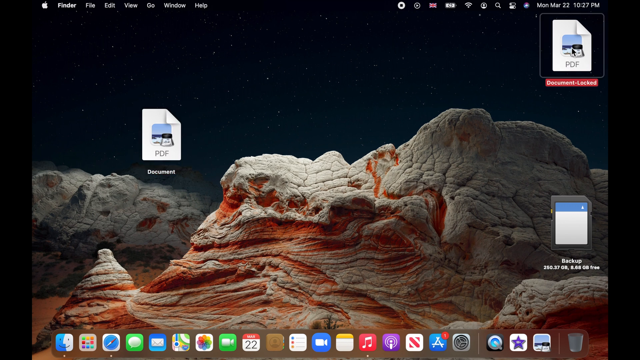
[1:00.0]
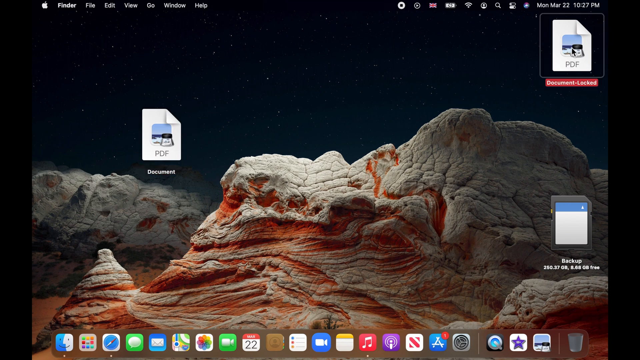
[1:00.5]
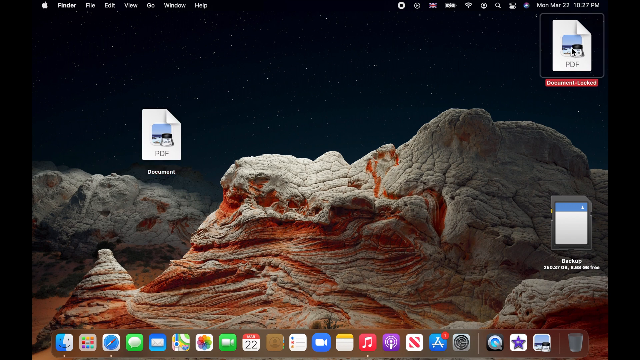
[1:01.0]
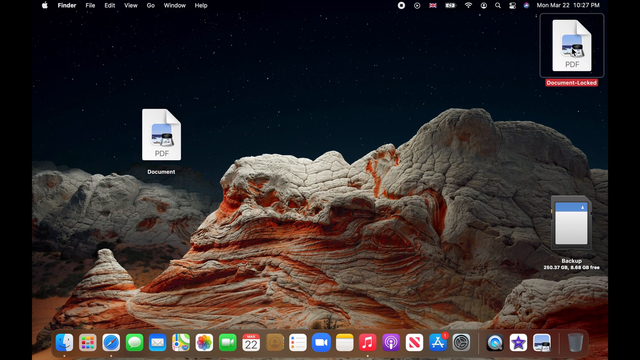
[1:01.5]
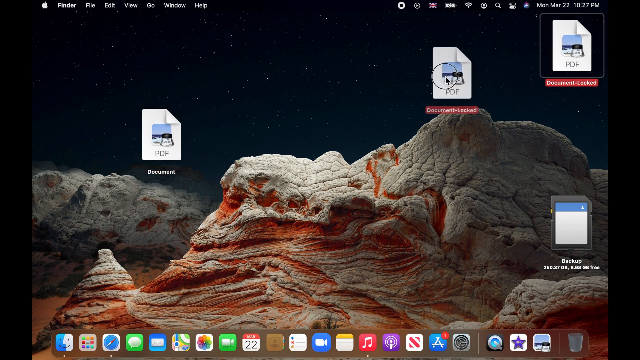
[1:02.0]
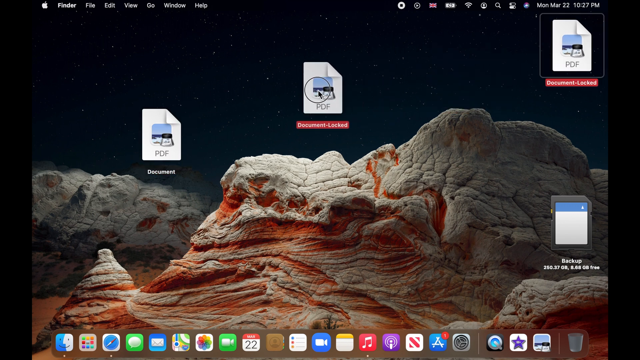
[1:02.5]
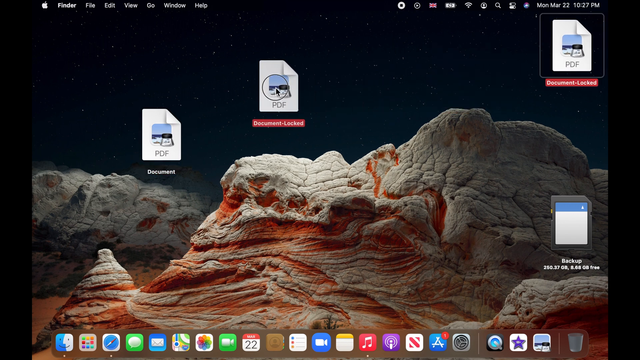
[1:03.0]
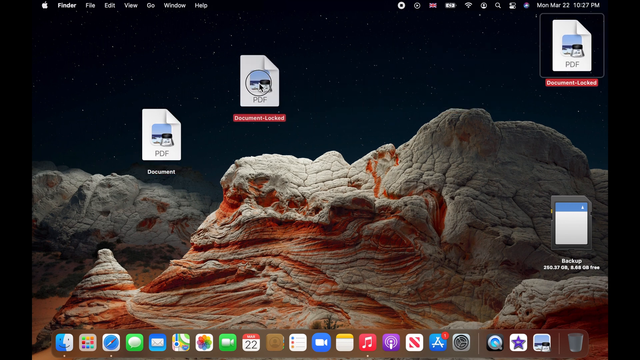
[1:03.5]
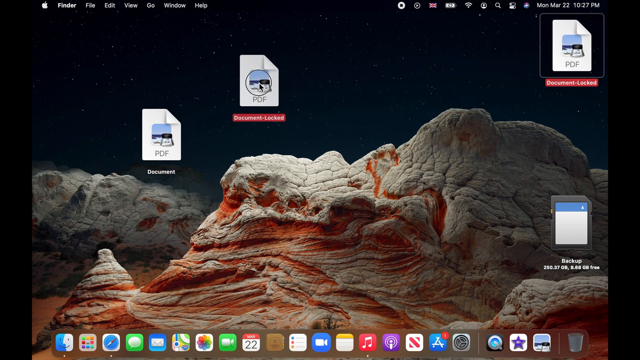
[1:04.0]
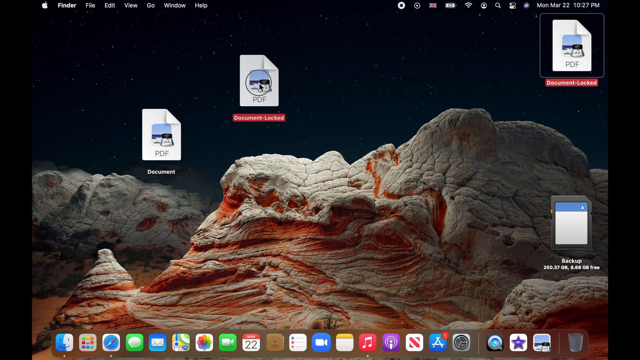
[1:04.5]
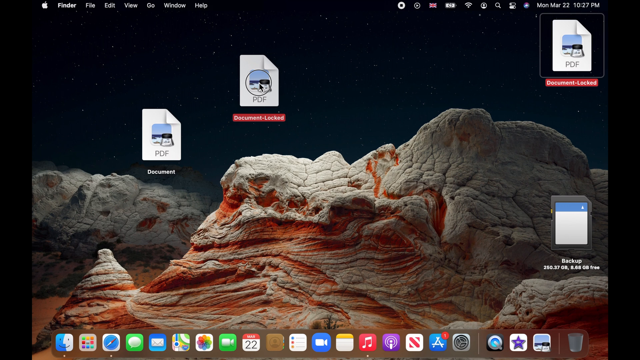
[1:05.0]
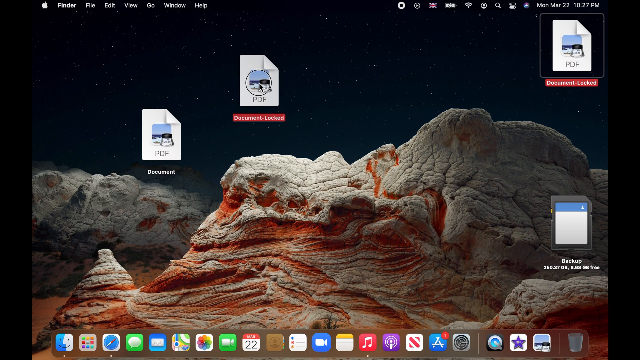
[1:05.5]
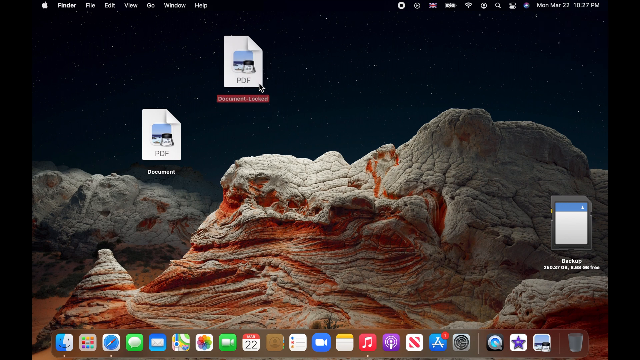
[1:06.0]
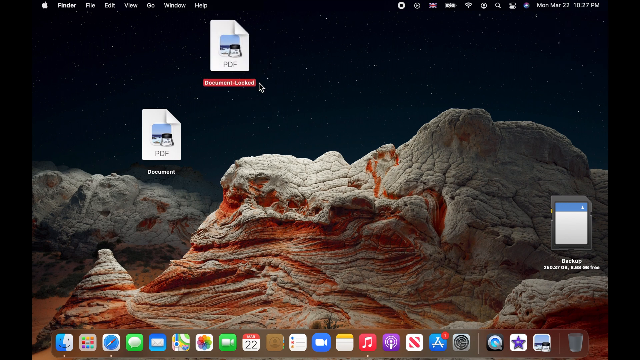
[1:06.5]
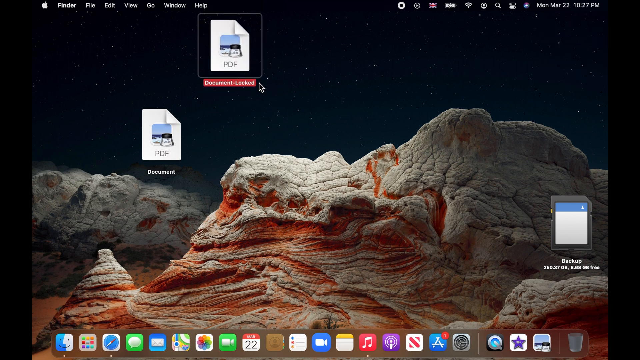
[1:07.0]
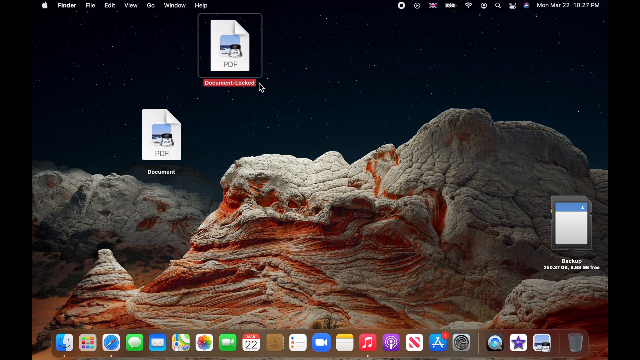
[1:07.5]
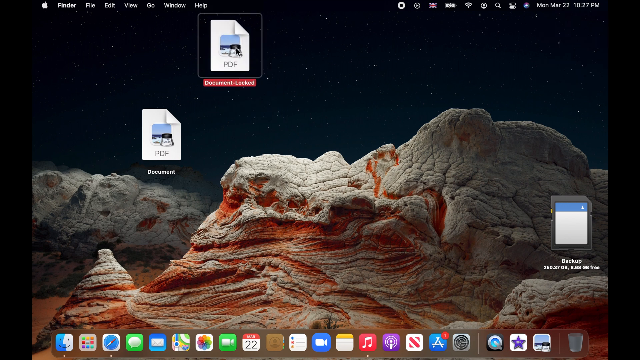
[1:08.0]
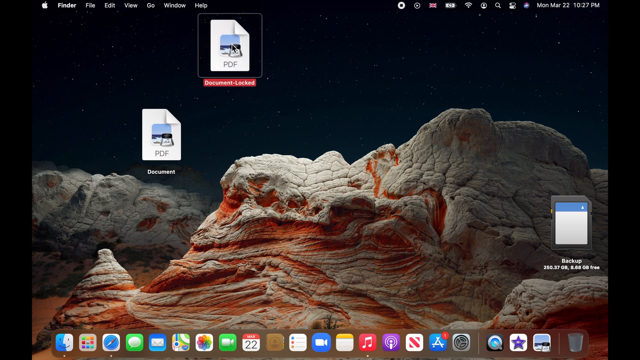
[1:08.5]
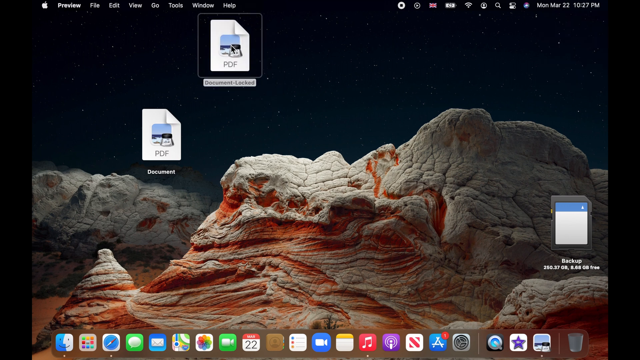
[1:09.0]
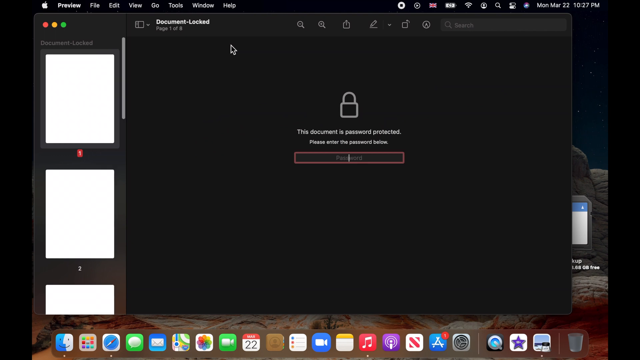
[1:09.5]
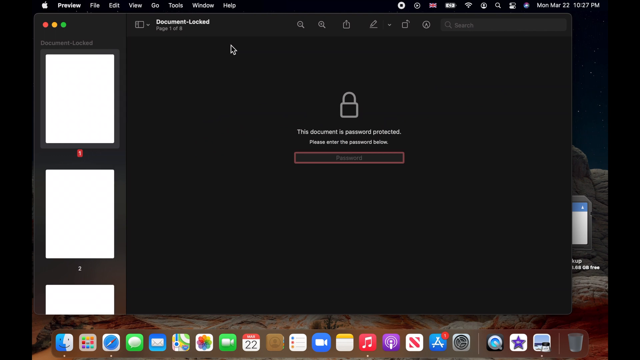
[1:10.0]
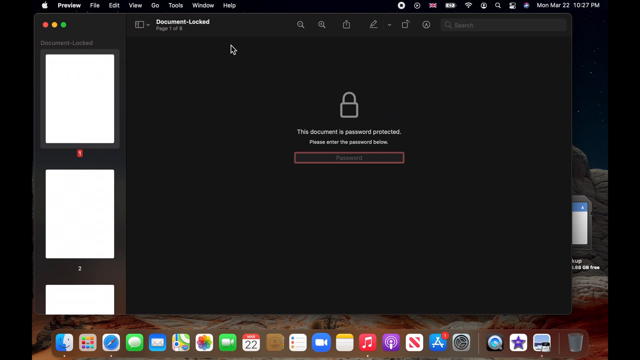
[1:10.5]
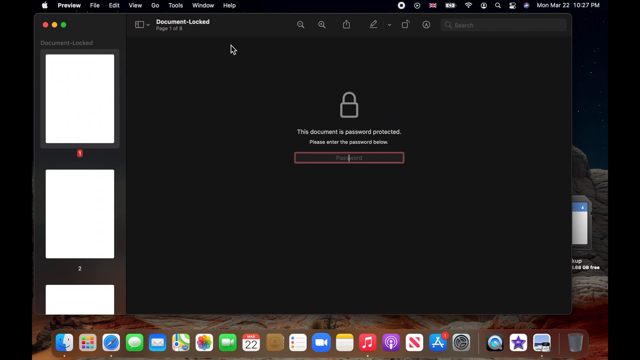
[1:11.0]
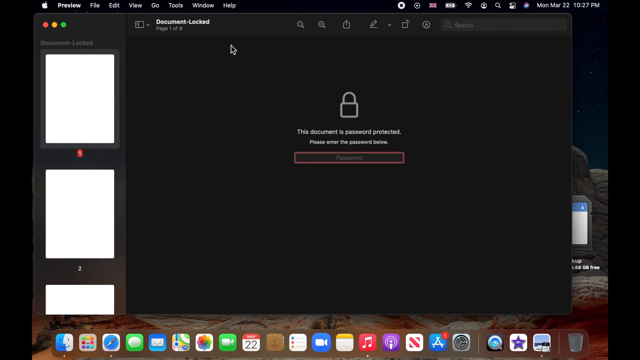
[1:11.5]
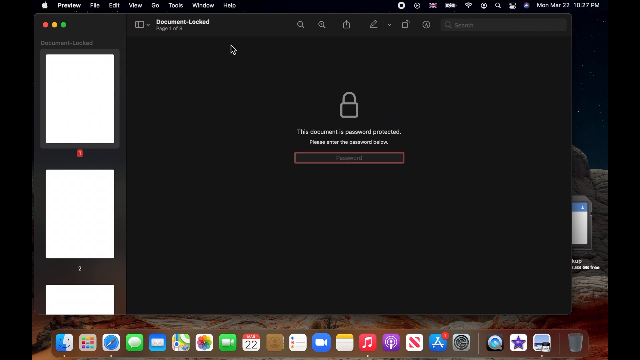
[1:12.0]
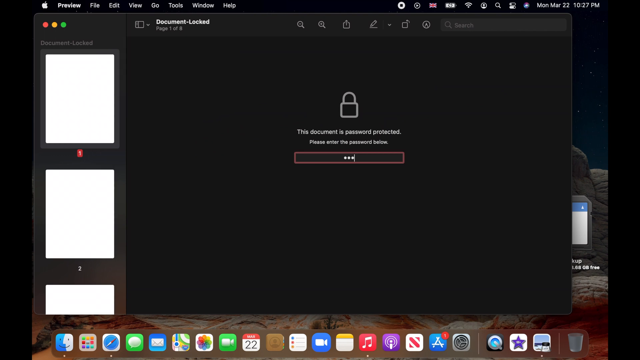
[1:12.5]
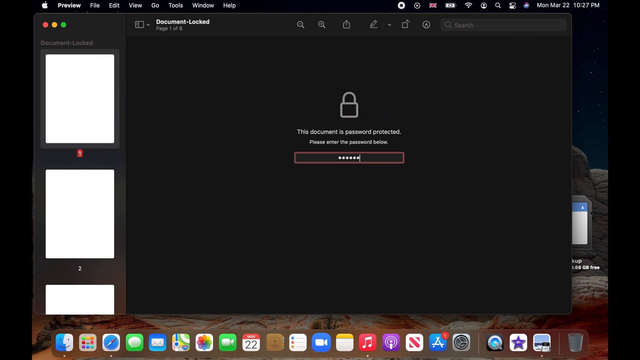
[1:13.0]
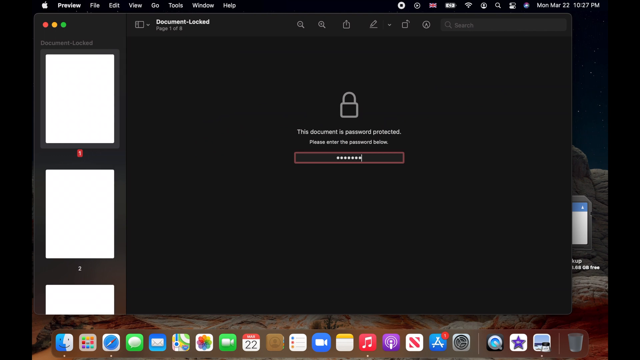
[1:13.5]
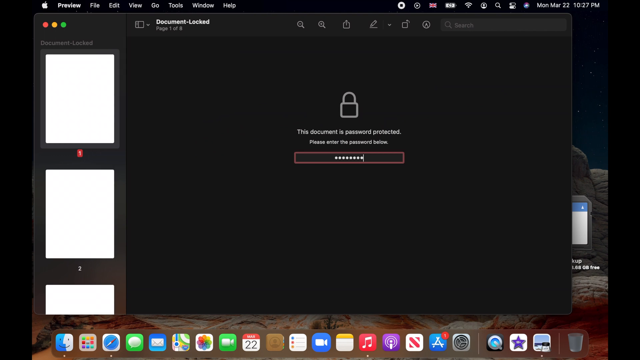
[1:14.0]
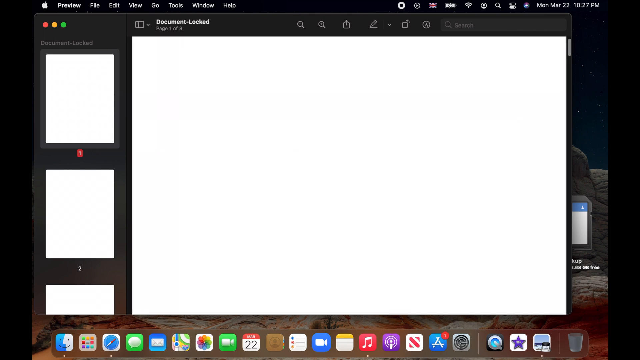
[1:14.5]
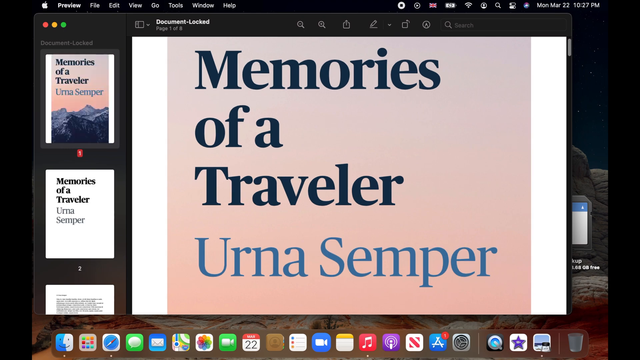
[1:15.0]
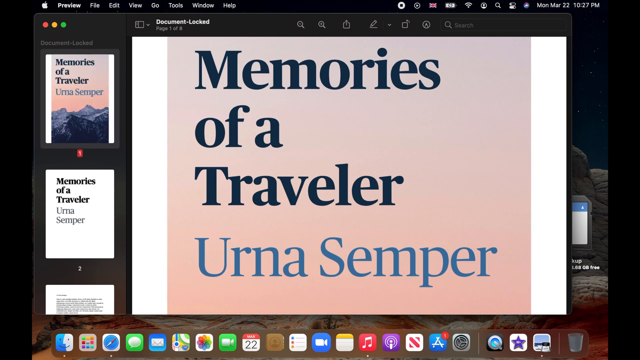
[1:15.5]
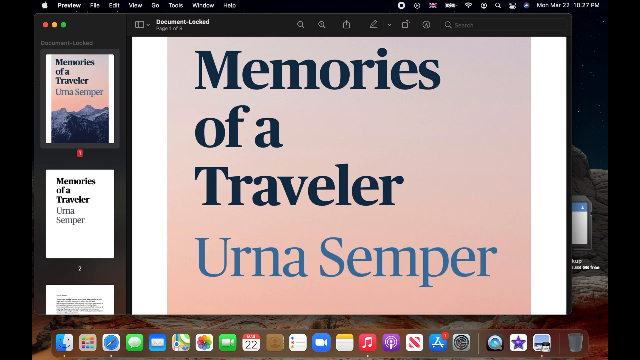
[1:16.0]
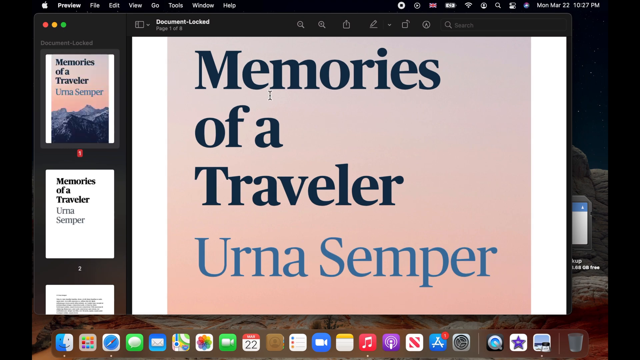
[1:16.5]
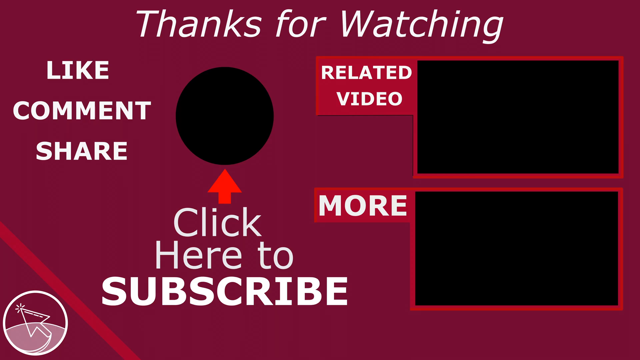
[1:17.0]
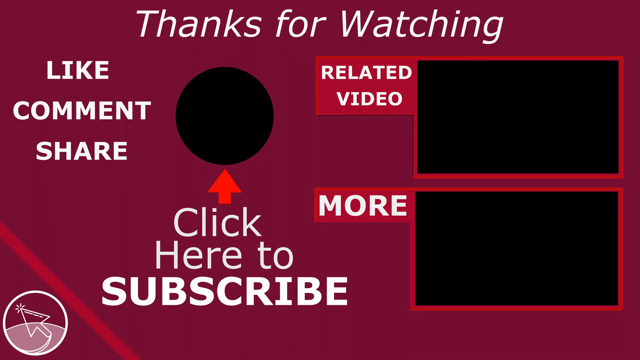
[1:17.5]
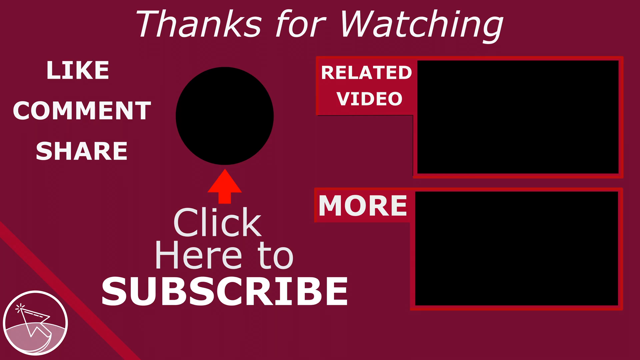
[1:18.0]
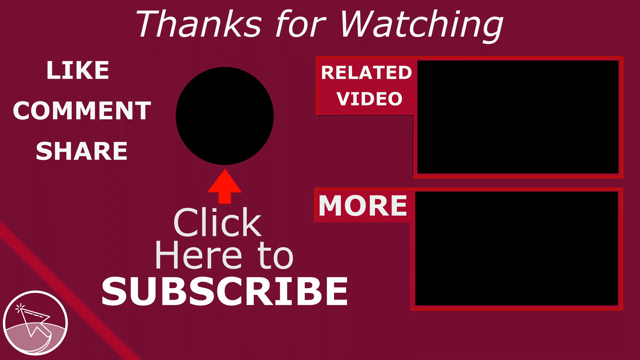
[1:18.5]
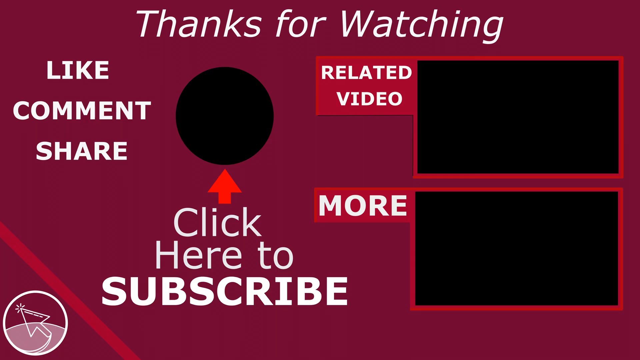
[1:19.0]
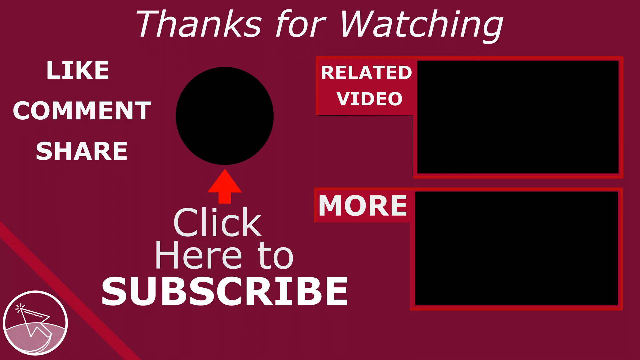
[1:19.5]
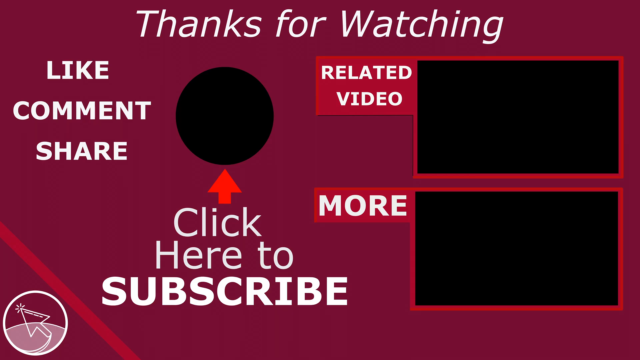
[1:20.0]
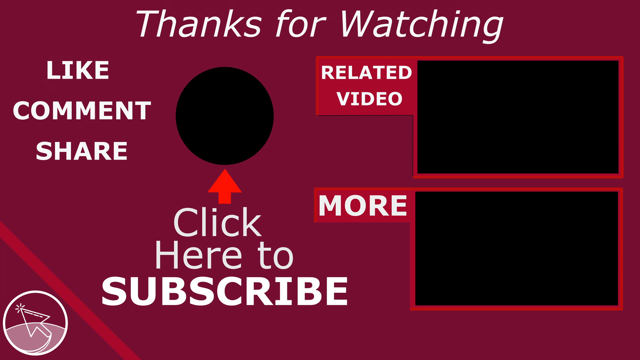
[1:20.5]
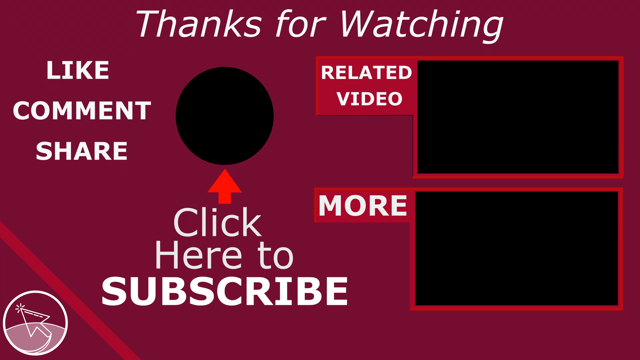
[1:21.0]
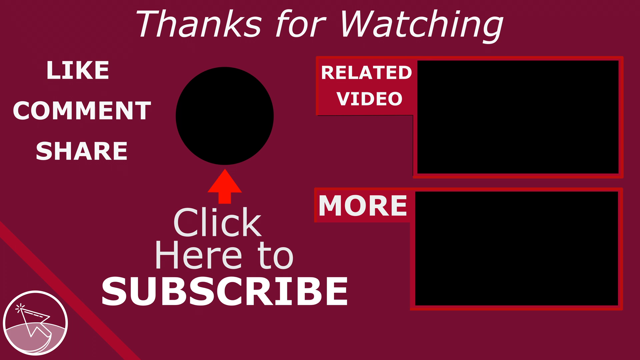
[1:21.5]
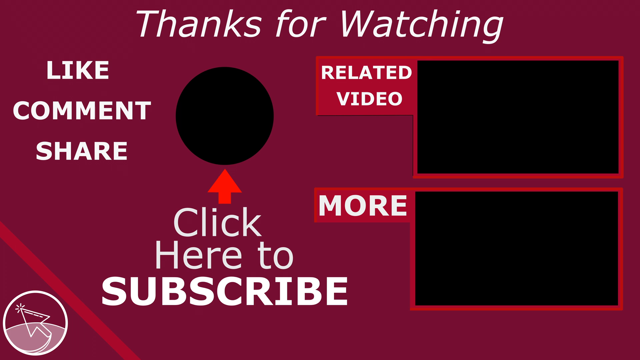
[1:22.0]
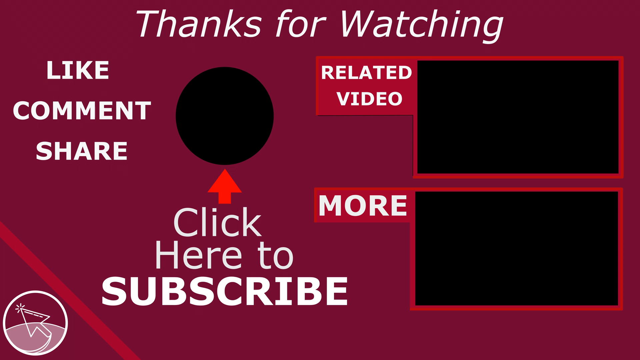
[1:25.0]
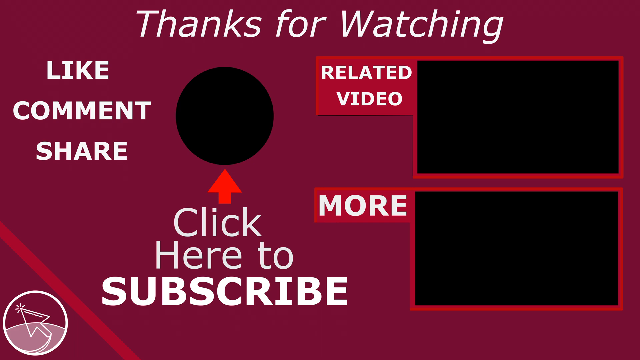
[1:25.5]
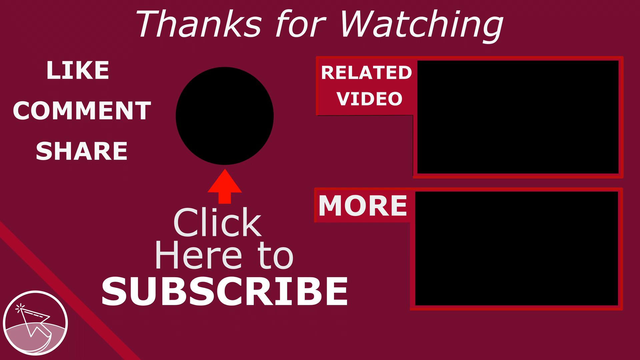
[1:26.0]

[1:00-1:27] A Mac desktop has three shortcuts. The first is a document with a PDF paper icon. In the top right-hand corner is another shortcut with the same icon, a piece of paper with a folded corner saying "PDF", named "document-locked". Underneath it, at the bottom right, is a shortcut that says "backup" with a hard drive icon. The cursor drags the "document-locked" shortcut to the middle of the screen and releases it, so that it is placed in the upper left middle. The document file is then double-clicked, bringing up a pop-up. On its left is a preview of the document, currently displaying only blank pages. In the middle is a black, dark gray screen with a lock icon and the text "this document is password-protected. Please enter the password below", with a field containing the word "password" surrounded by red. The cursor clicks on that field and types in the password. The document then appears, in the previews on the left and in the main display of the program: "Memories of a Traveler, Irma Semper", shown as what looks like the cover of a book with mountains at the bottom and a pink sky. The video then switches to a slide with a red, burgundy background that says "thanks for watching", "like", "comment", "share", "click here to subscribe", "related video", and another spot that says "more".